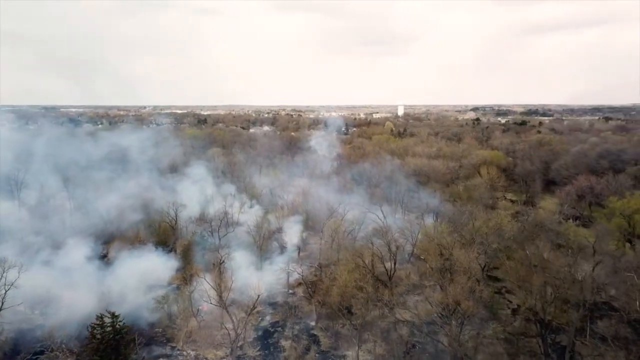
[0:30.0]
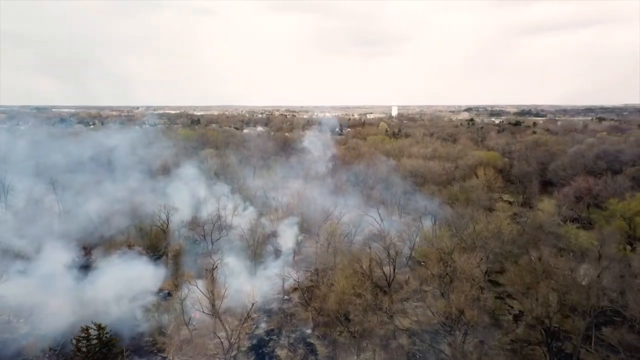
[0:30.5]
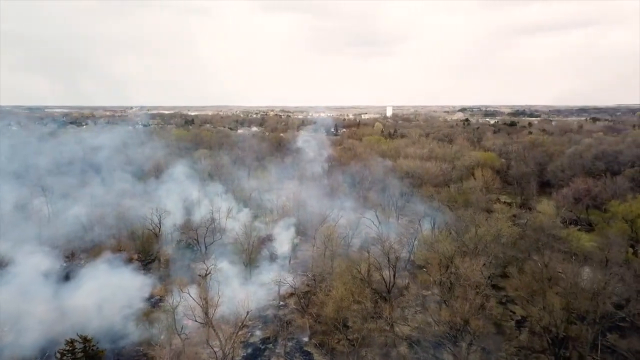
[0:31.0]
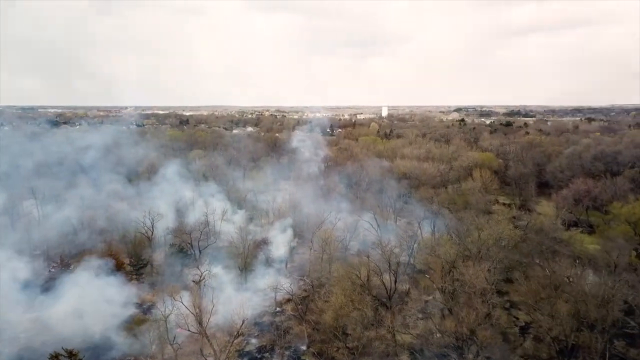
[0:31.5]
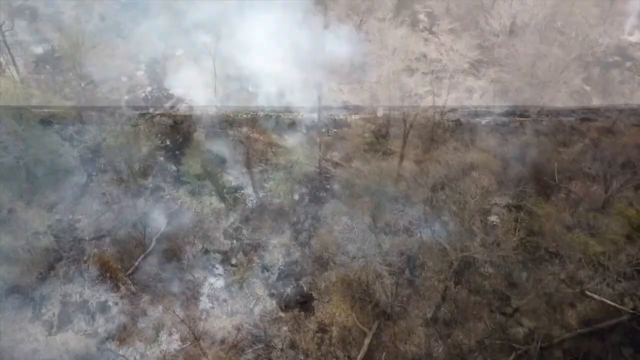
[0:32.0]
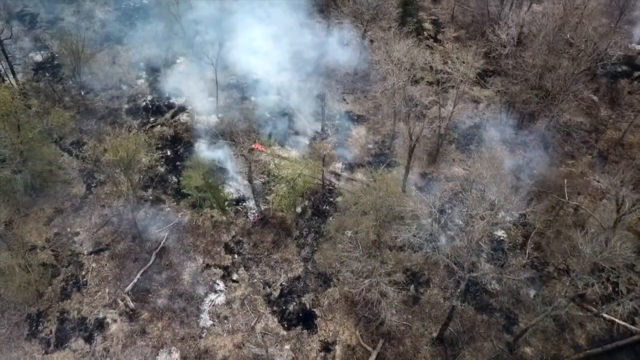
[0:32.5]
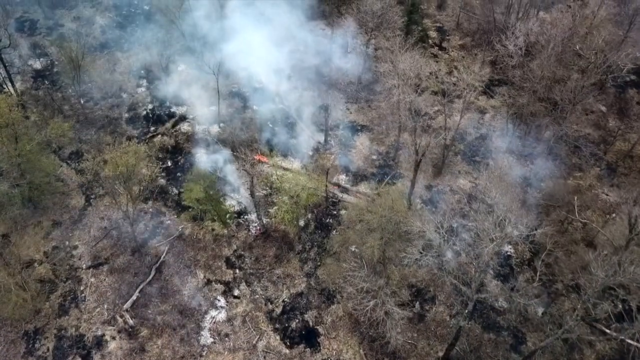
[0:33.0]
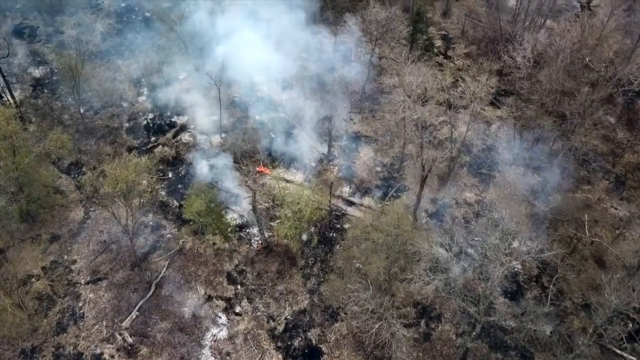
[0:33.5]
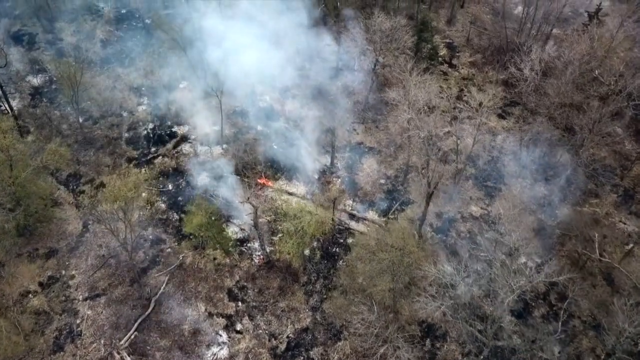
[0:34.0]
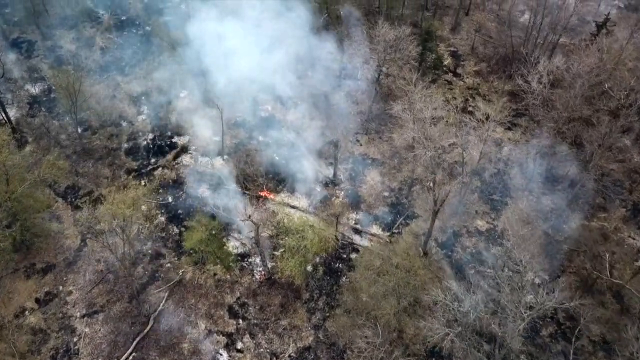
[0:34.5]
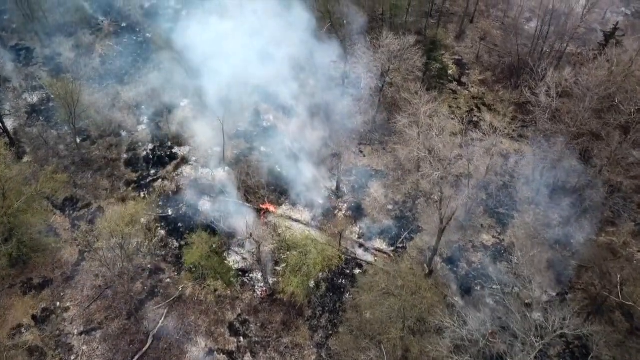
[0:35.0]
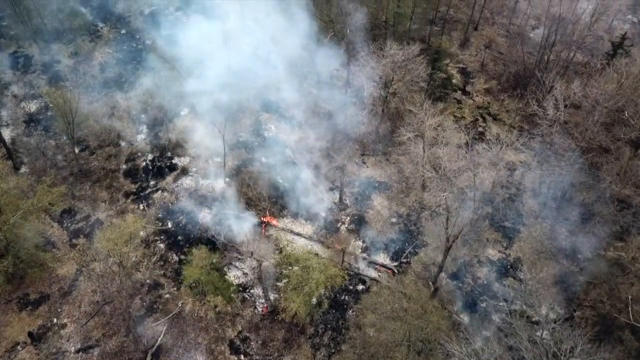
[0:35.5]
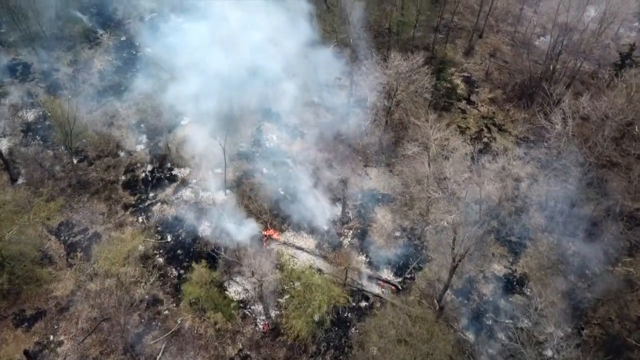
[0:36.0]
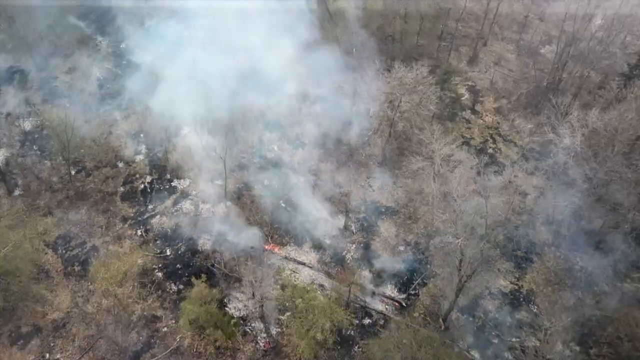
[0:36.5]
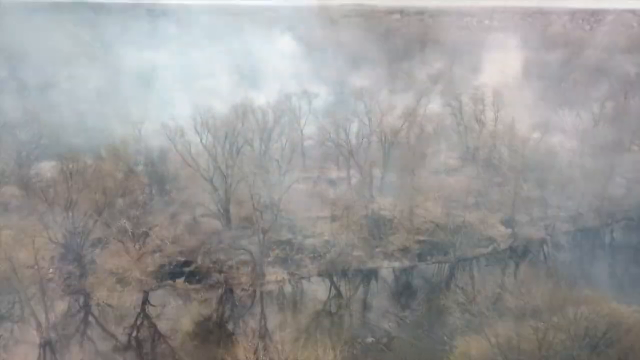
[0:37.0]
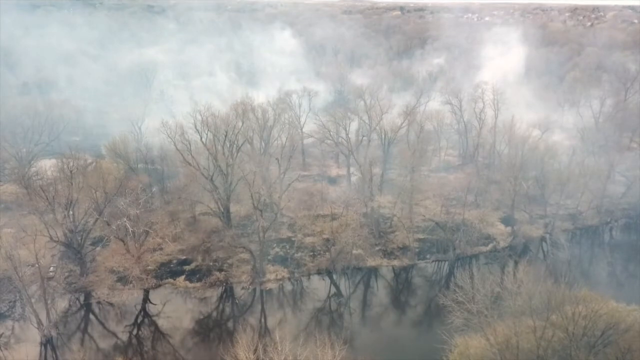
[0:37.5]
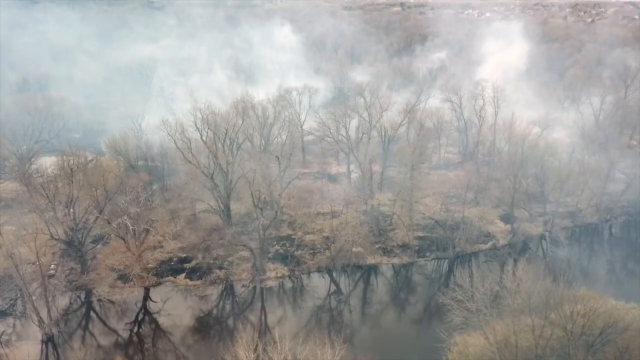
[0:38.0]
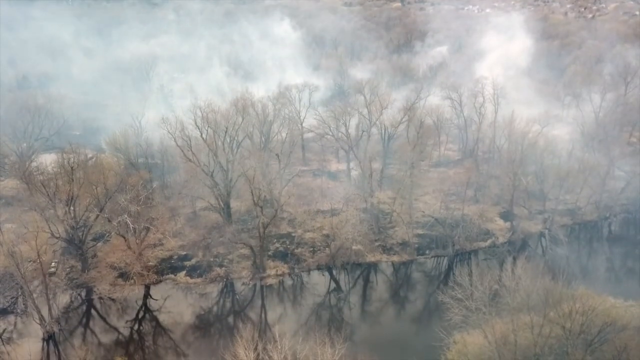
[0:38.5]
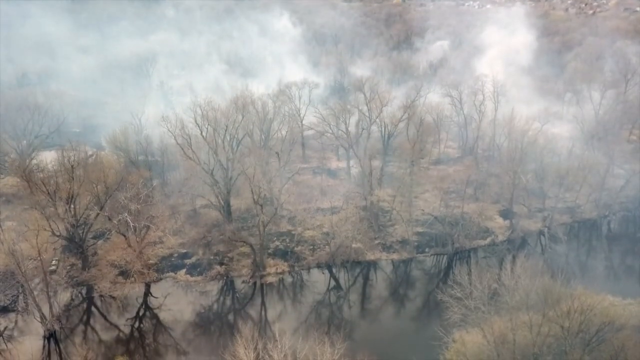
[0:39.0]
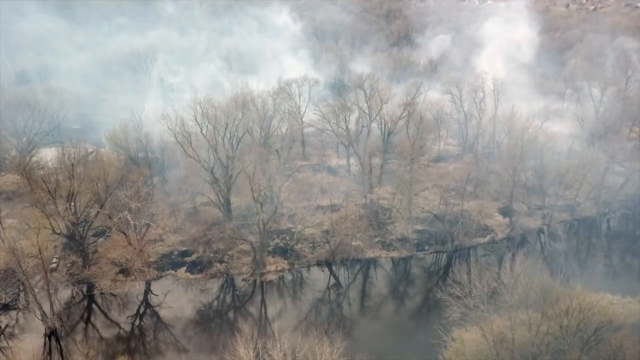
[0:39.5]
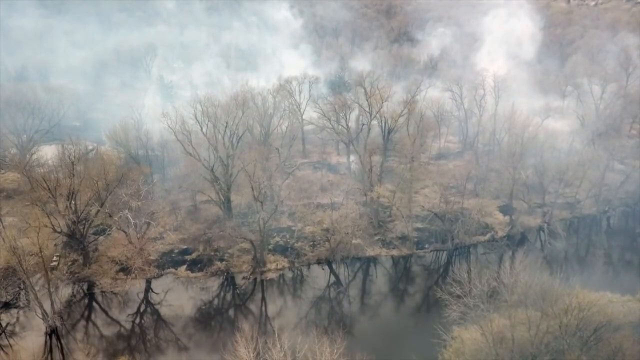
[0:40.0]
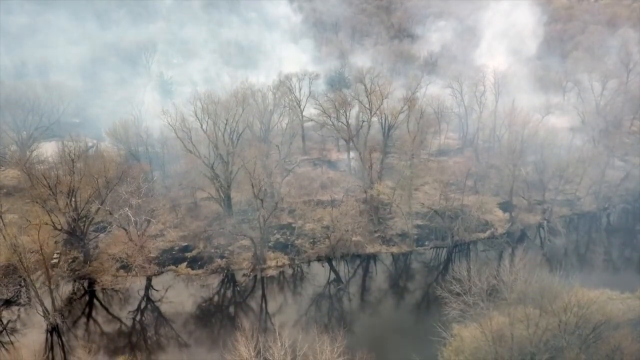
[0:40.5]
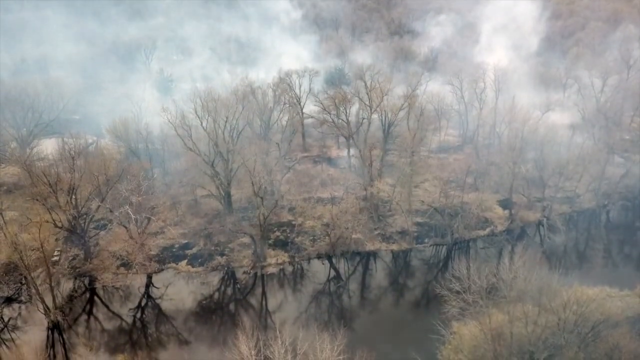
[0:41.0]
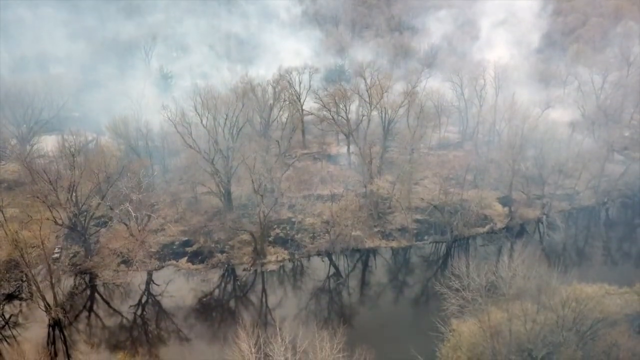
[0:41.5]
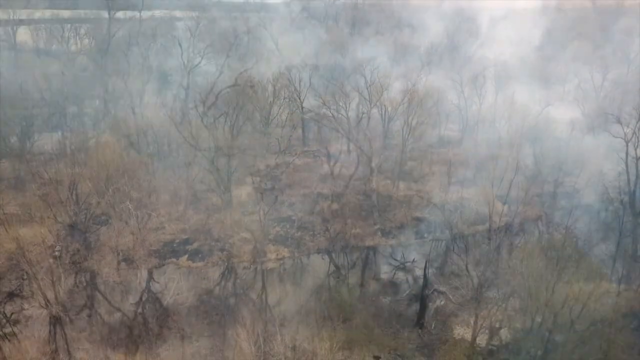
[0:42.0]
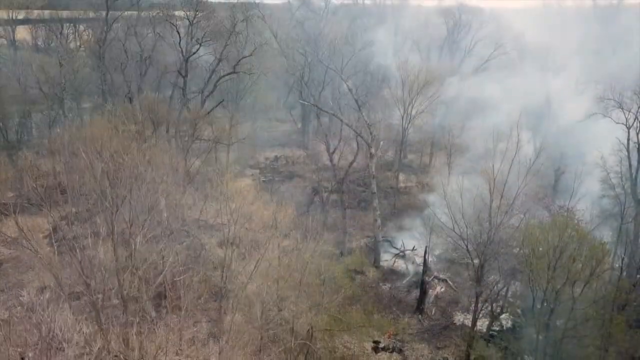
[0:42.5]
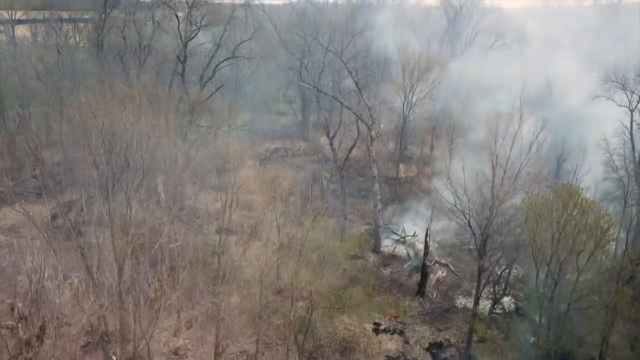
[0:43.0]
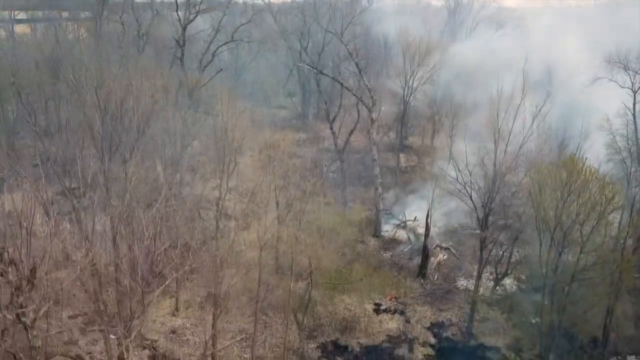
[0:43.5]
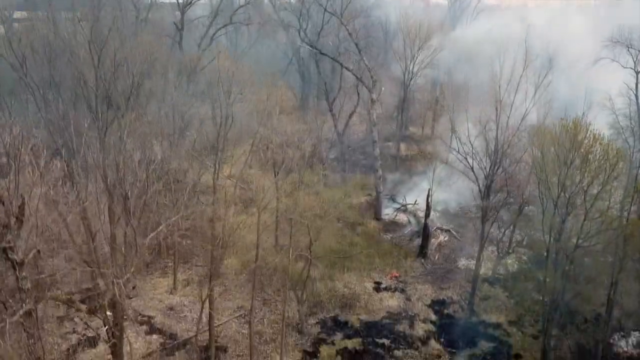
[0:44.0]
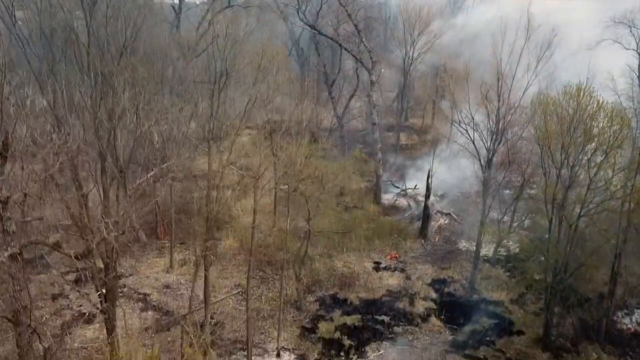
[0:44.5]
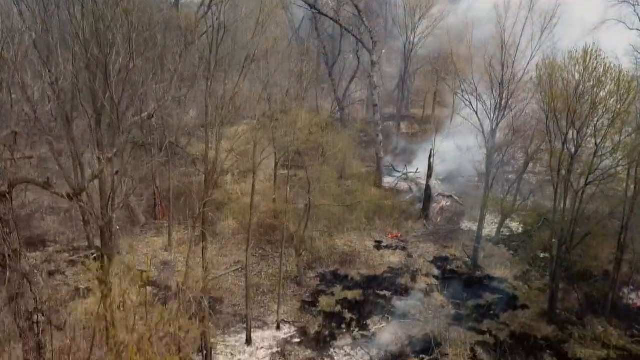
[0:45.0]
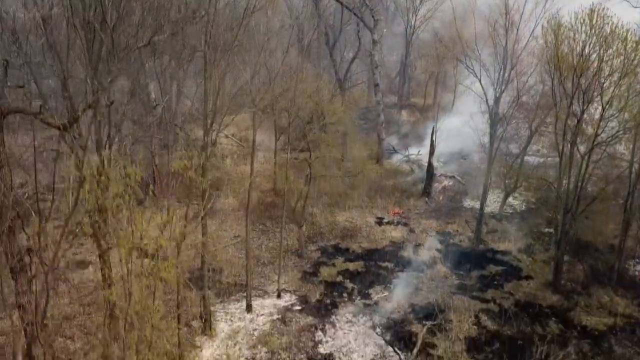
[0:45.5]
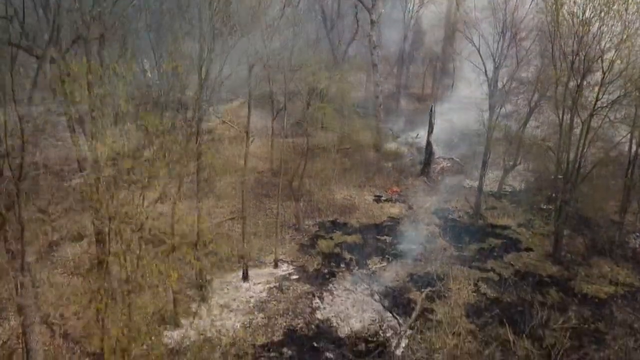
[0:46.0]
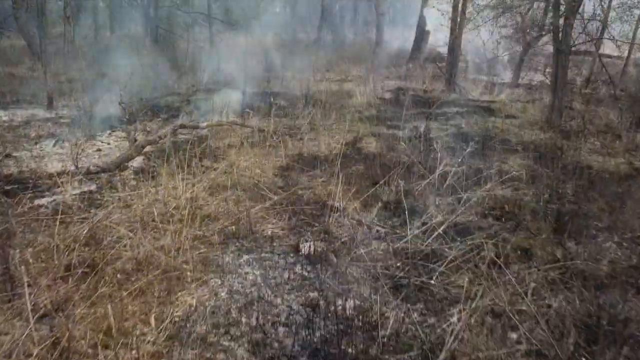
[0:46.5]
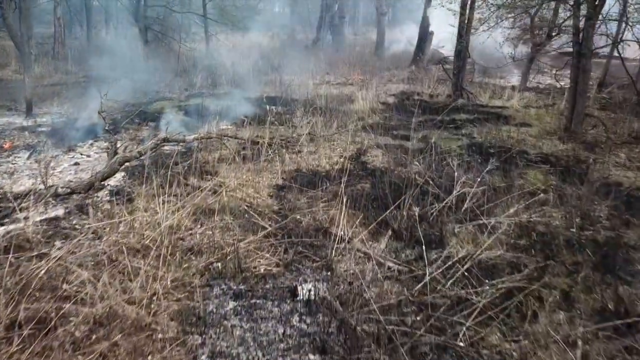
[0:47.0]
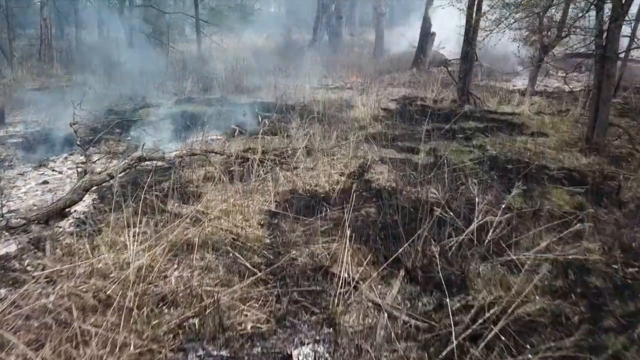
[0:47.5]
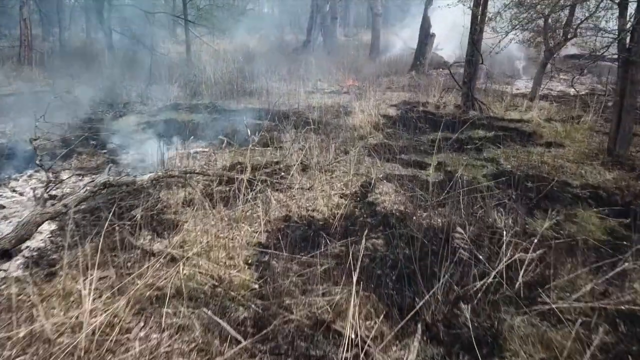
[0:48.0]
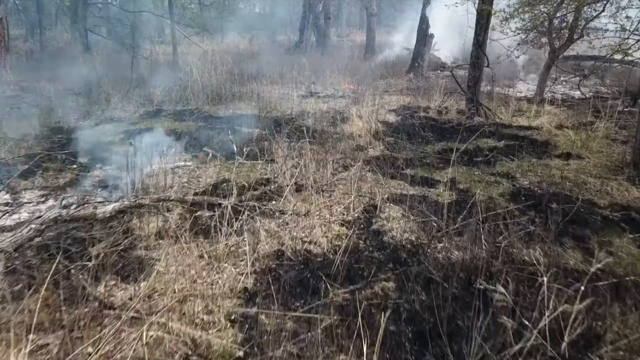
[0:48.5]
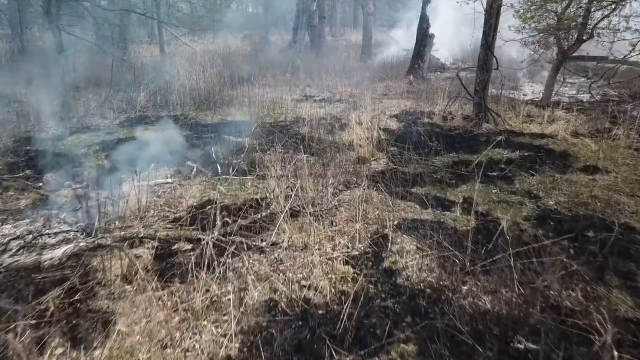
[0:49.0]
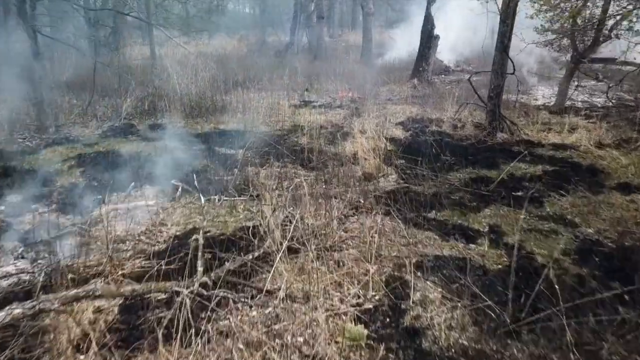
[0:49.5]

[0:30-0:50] Brush and trees near the Minnesota River have been burned. The view moves through the burned area, showing close-up areas of burned trees, twigs and areas along the river. Smoke rises, mostly white with some gray flying up as well. The footage is taken from an aerial view as it moves down over the burned area. Some areas of the trees are black and burnt, almost charcoal-colored, while other areas apparently were skipped or were not burnt as badly.